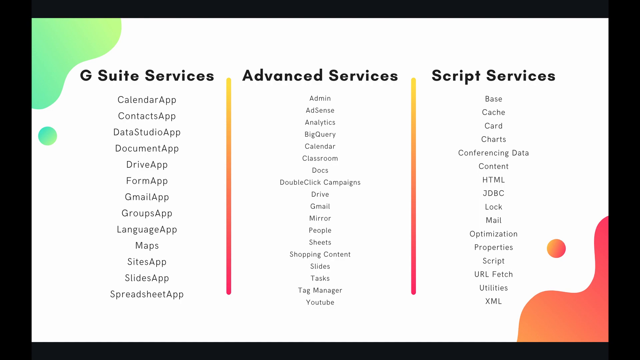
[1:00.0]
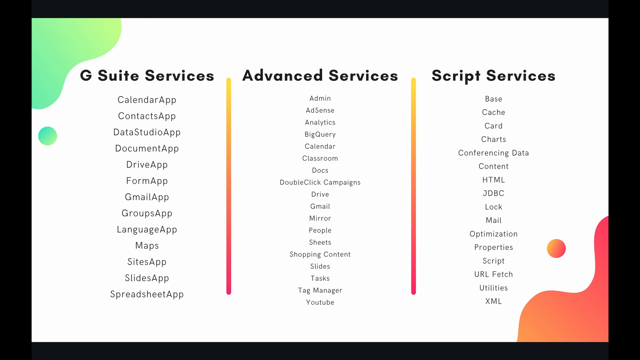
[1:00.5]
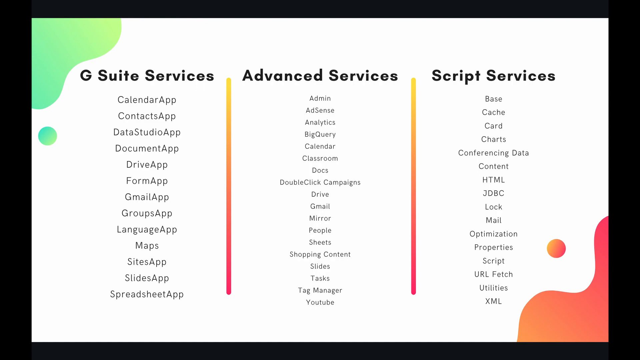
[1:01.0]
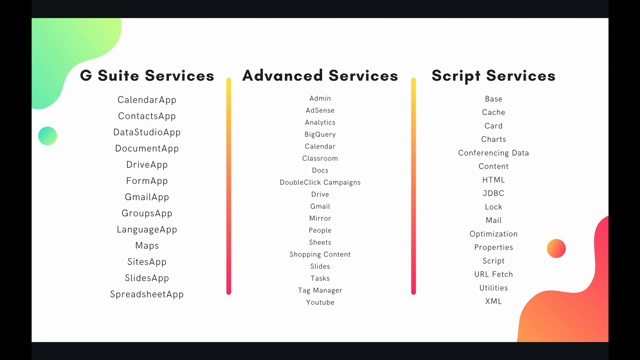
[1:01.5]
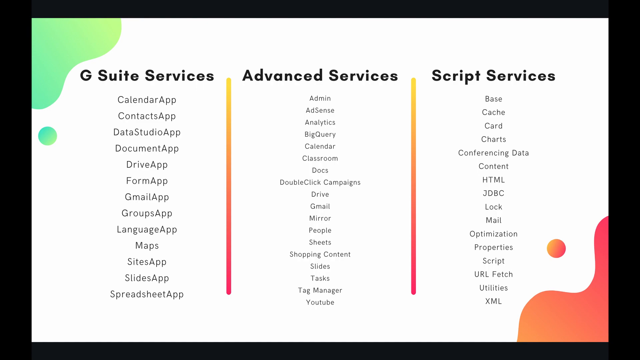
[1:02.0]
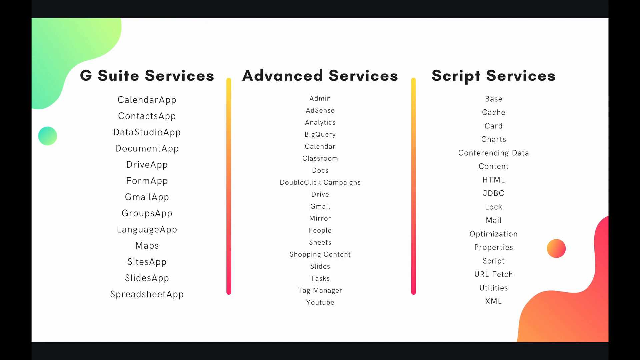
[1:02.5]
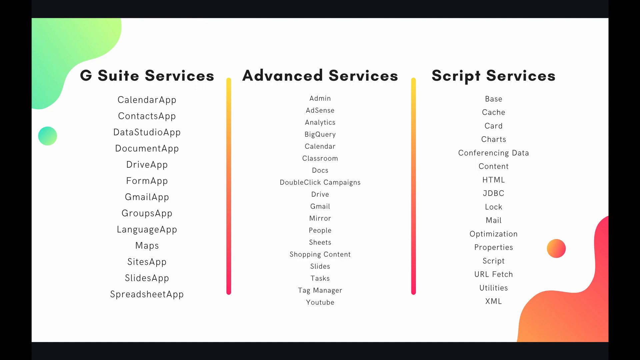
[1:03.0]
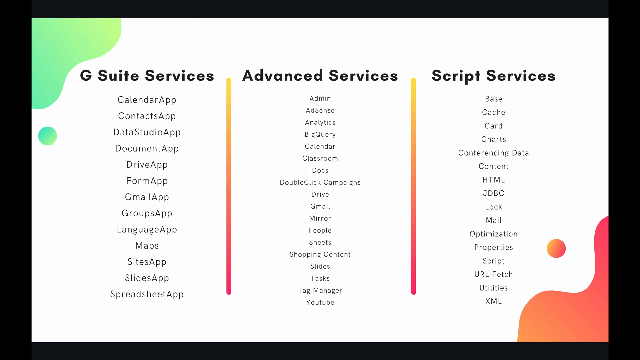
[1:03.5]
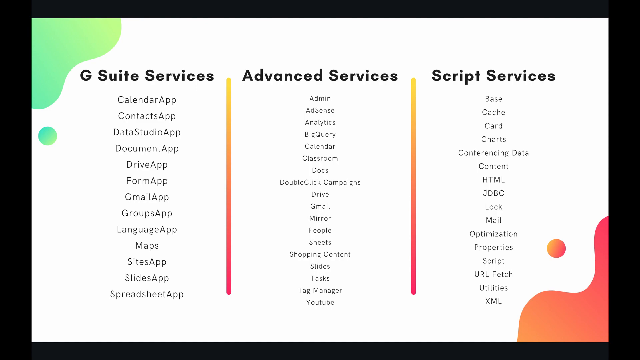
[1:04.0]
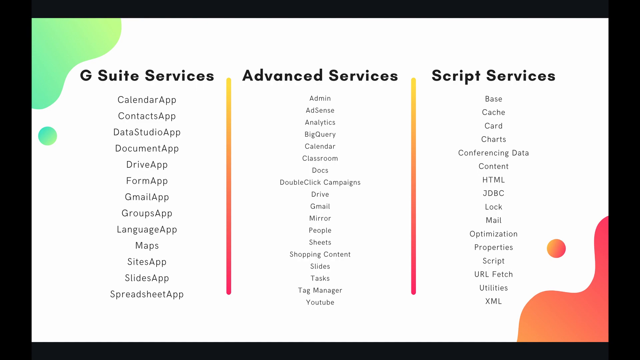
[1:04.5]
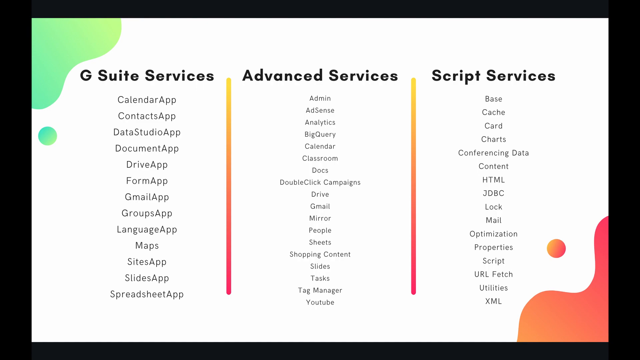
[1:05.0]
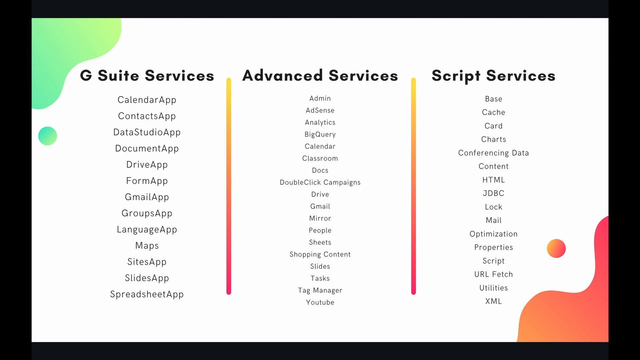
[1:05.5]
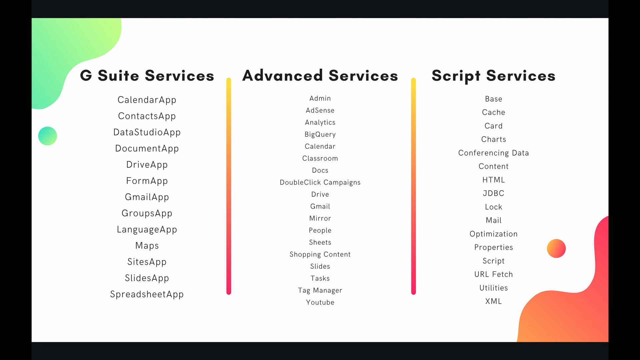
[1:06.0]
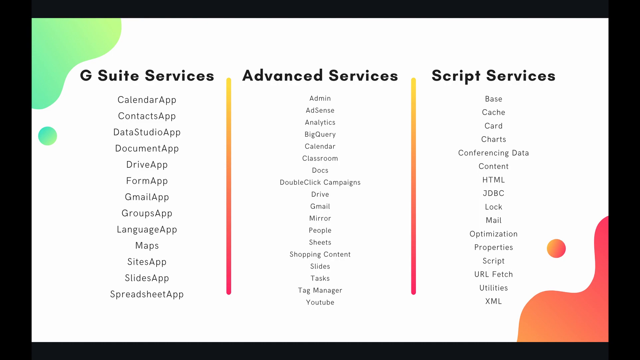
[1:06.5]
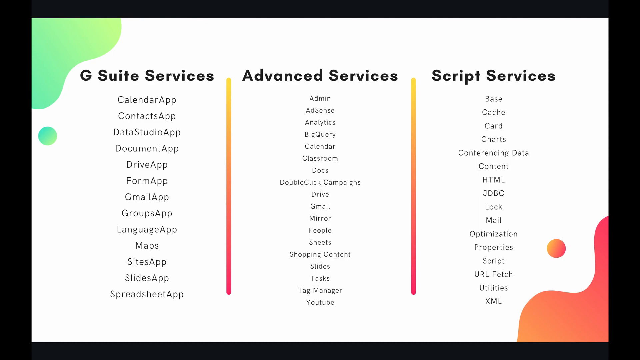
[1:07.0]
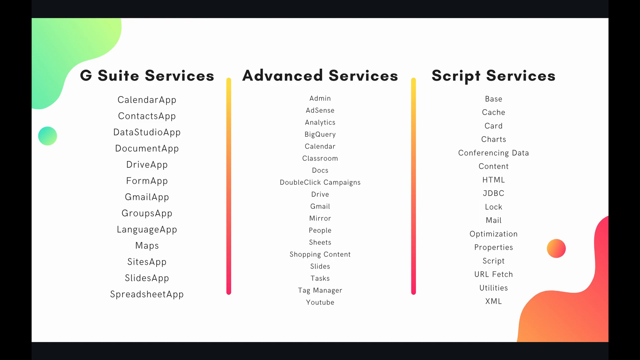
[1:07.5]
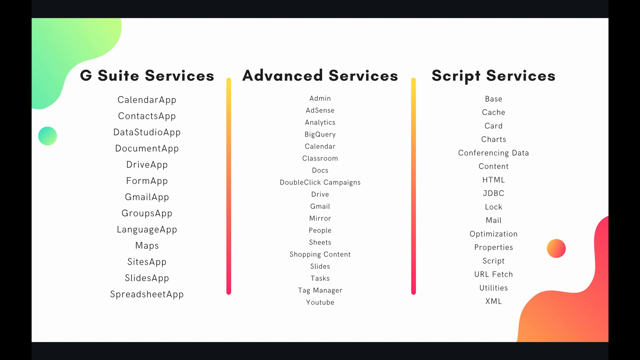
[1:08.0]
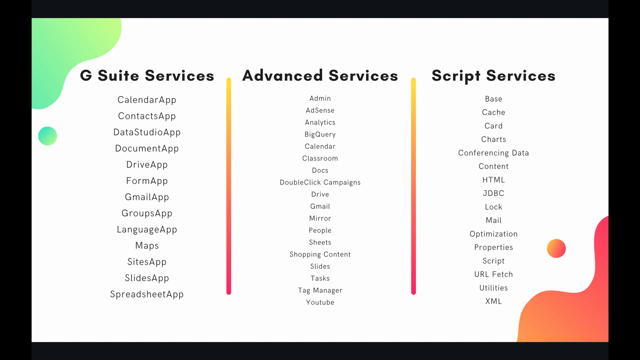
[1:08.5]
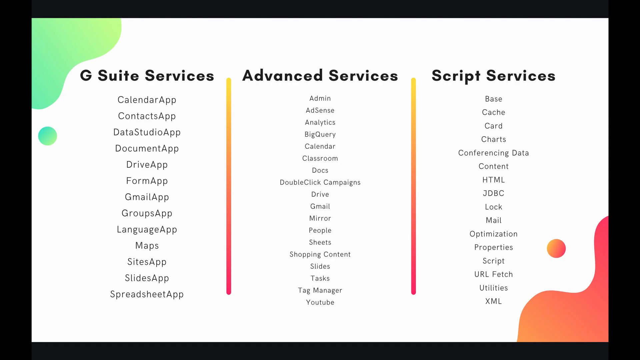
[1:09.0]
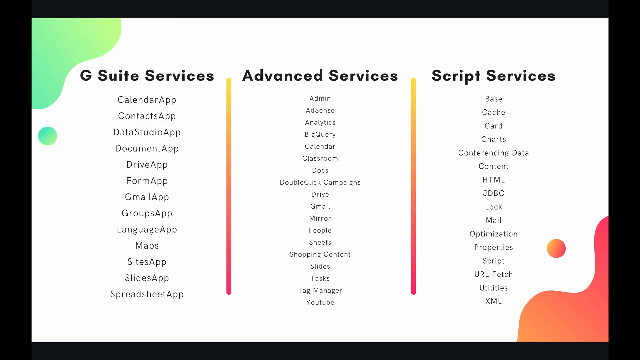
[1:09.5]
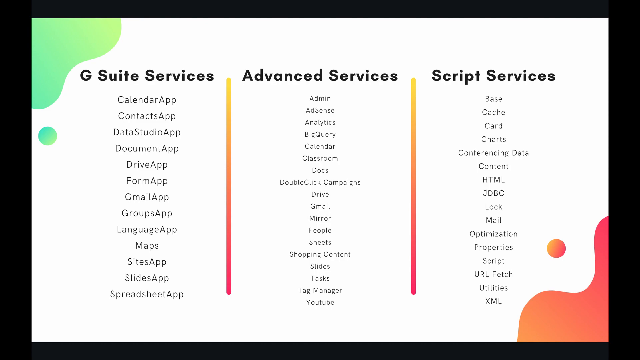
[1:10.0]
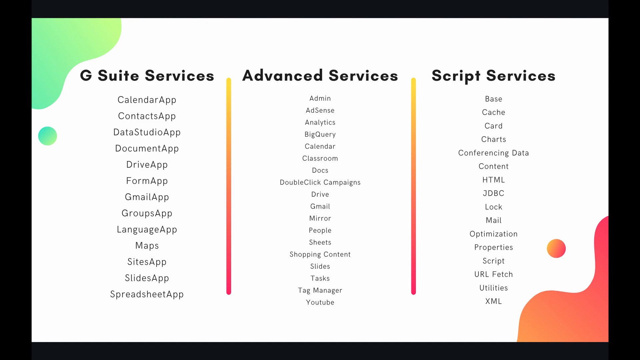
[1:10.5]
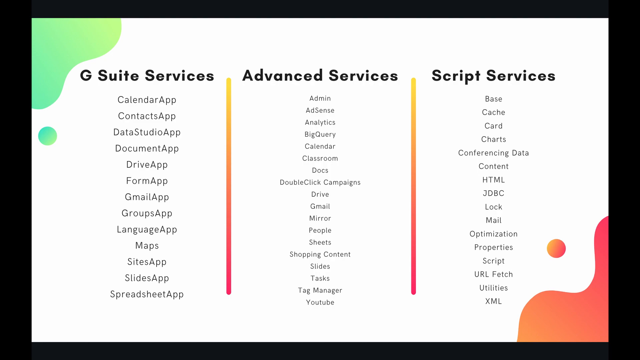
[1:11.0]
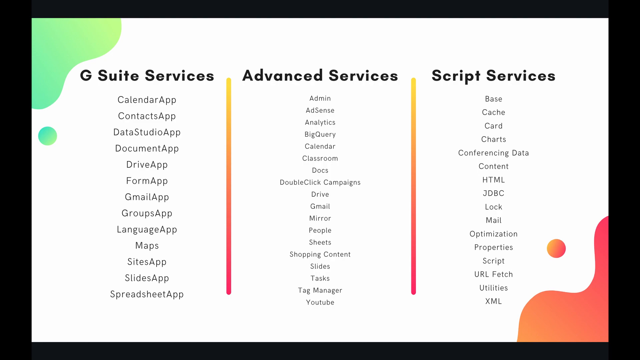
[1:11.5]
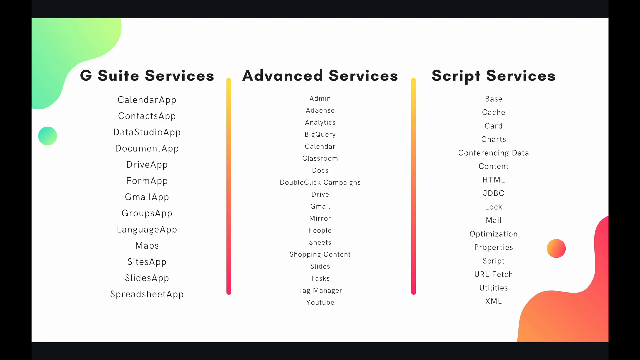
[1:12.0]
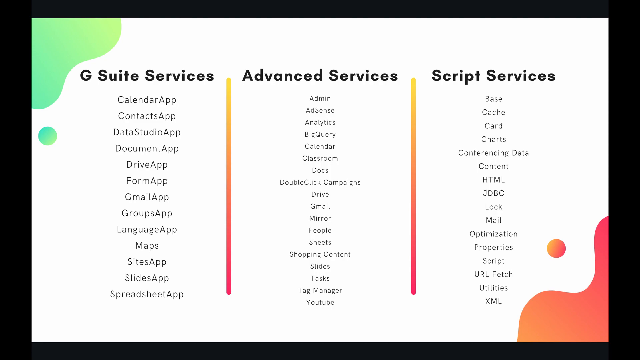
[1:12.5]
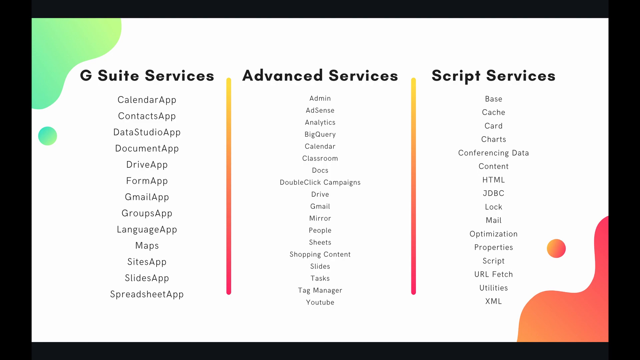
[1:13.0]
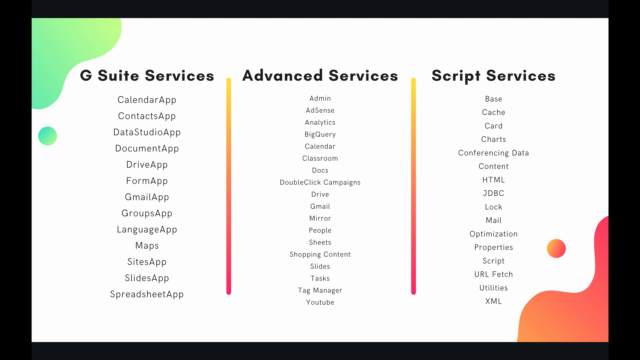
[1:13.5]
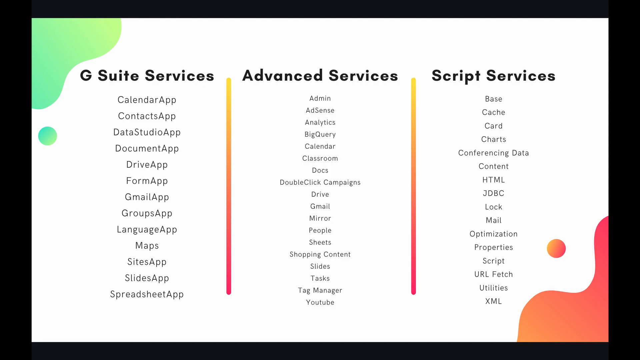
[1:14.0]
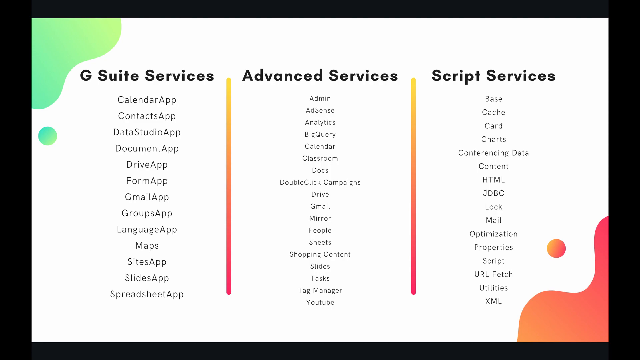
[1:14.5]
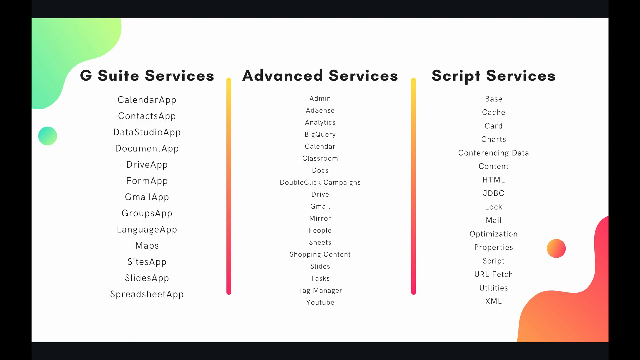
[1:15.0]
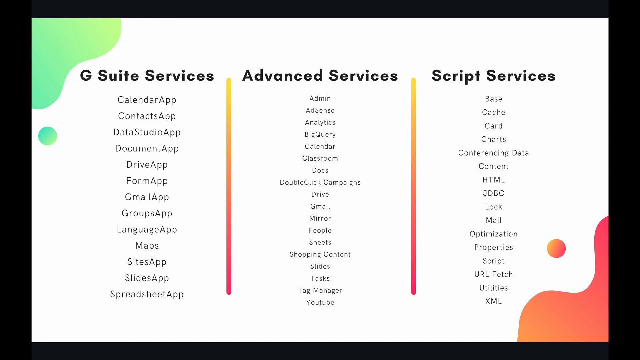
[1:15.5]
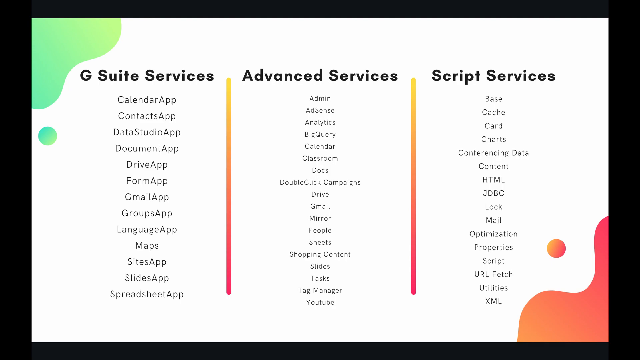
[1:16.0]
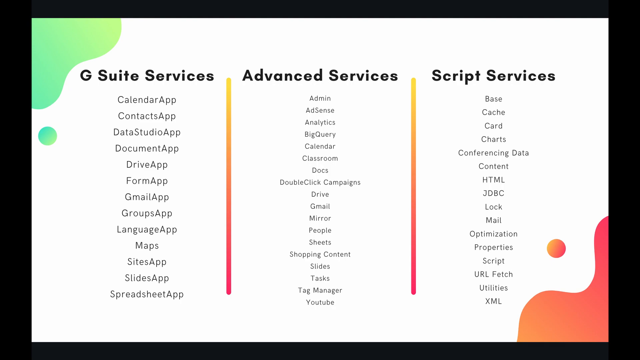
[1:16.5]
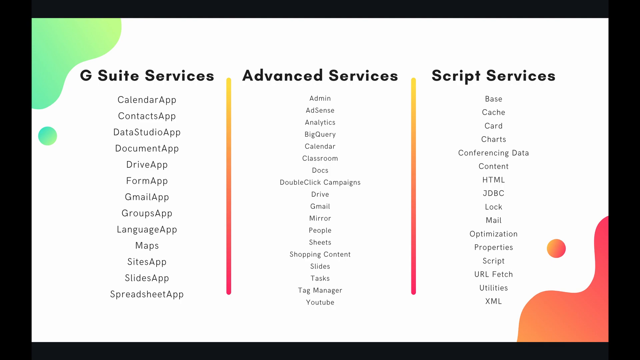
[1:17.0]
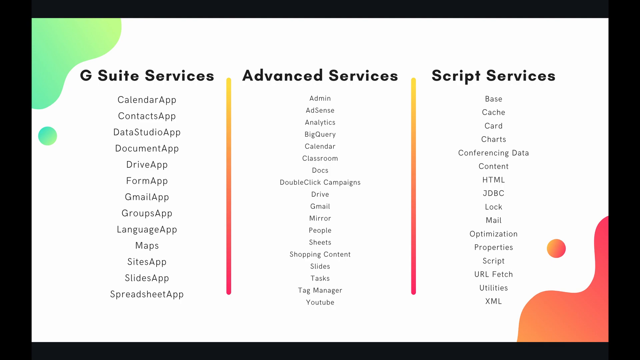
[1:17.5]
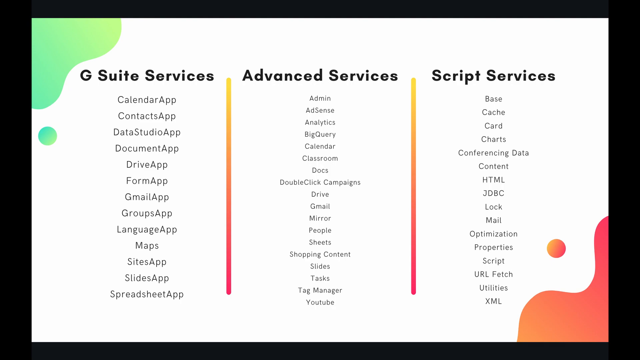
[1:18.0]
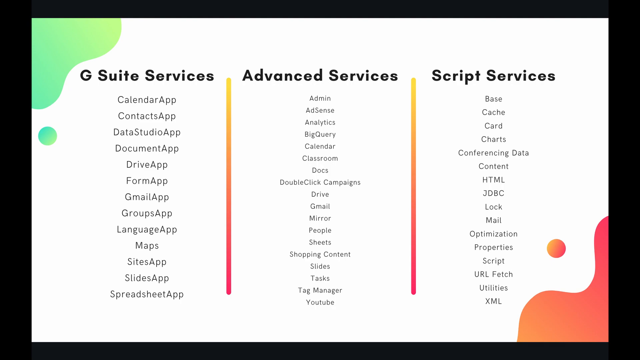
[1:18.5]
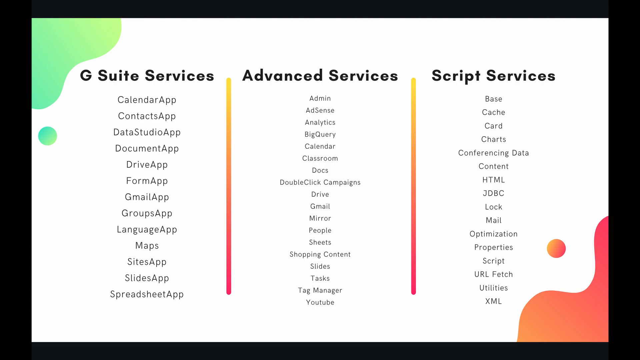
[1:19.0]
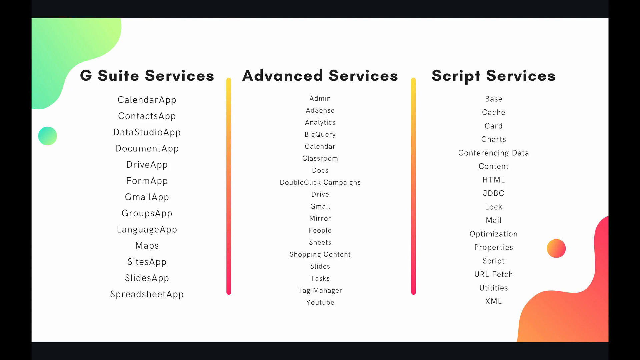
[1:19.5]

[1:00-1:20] A slide fills most of the screen in white, with an aqua green blob in the top left corner. It has three columns, each separated by a vertical line that starts yellow at the top and becomes more red going down. Each column has a bolded title: "G Suite Services" on the left, "Advanced Services" in the middle, and "Script Services" on the right. Below G Suite Services is a list of apps: Calendar app, Contacts app, Data Studio app, Document app, Drive app, Form app, Gmail app, Groups app, Language app, Maps, Sites app, Slides app, Spreadsheet app. Under Advanced Services are Admin, AdSense, Analytics, BigQuery, Calendar, Classroom, Docs, DoubleClick Campaigns, Drive, Gmail, Mirror, People, Sheets, Shopping Content, Slides, Tasks, Tag Manager, YouTube. Under Script Services are Base, Cache, Card, Chart, Conferencing Data, Content, HTML, JDBC, Log, Mail, Optimization, Property, Script, URL Fetch, Utilities, and XML. The slide stays on screen the whole time without changing.